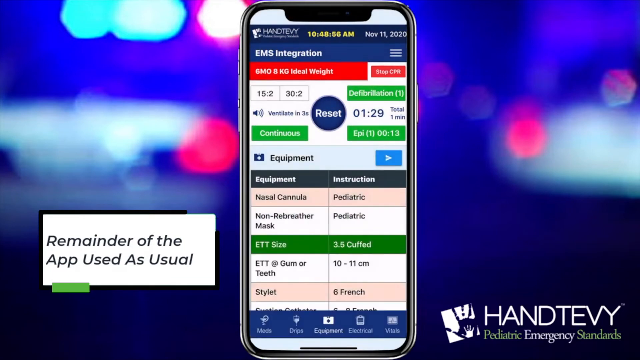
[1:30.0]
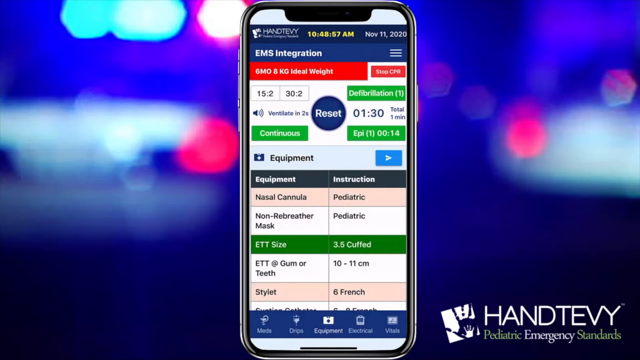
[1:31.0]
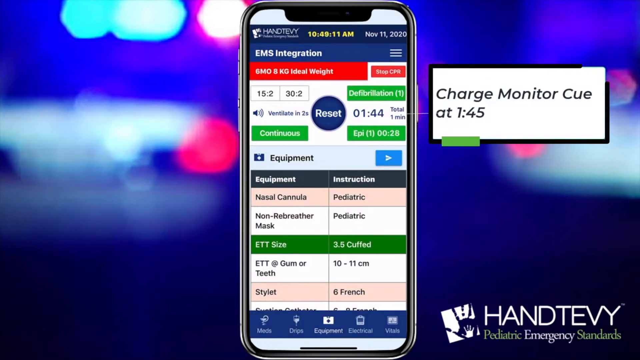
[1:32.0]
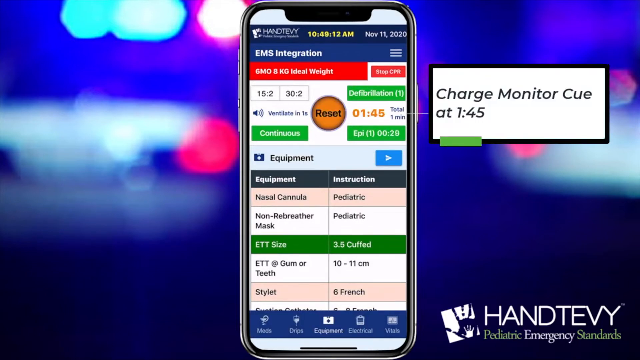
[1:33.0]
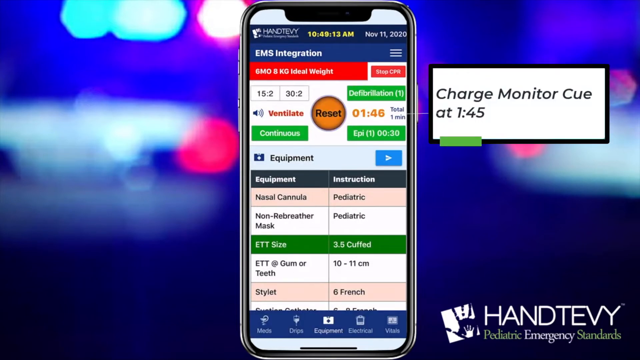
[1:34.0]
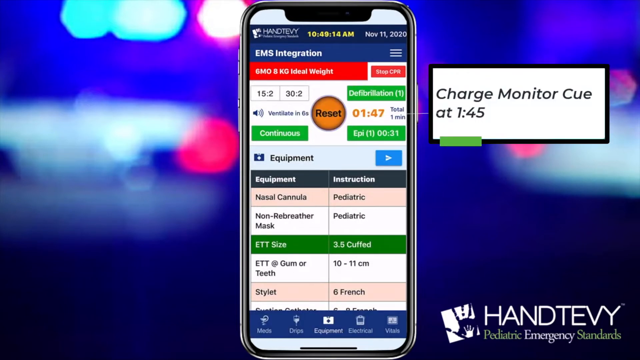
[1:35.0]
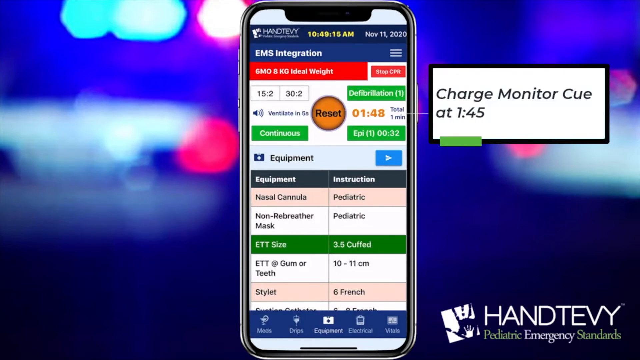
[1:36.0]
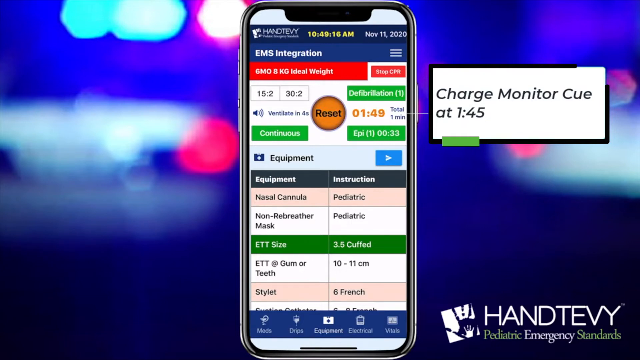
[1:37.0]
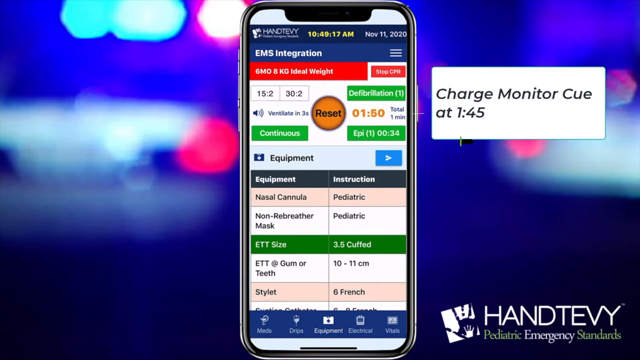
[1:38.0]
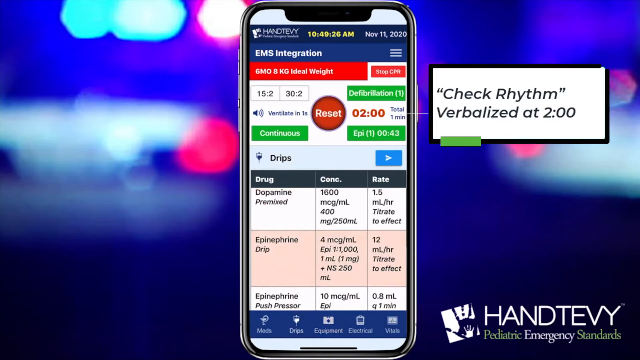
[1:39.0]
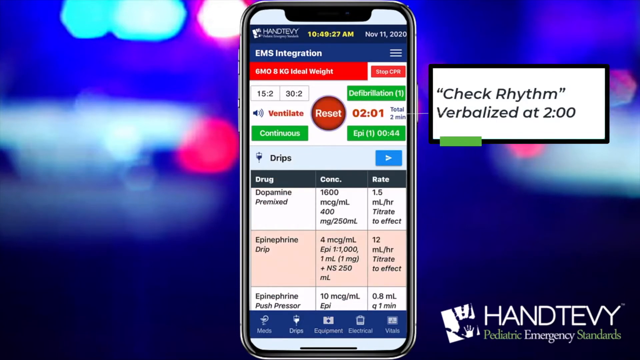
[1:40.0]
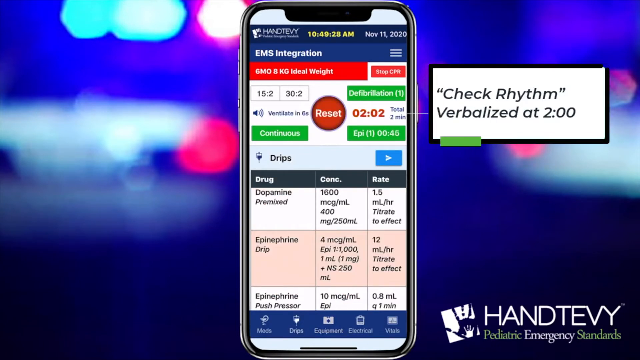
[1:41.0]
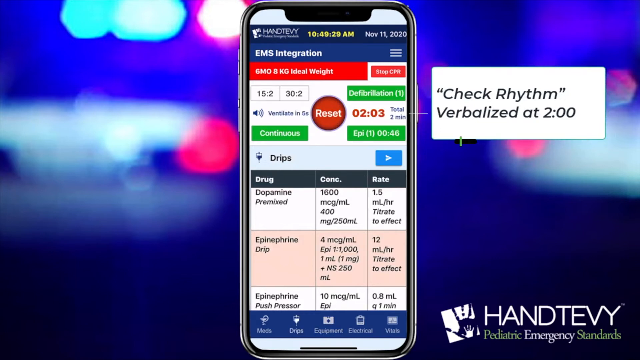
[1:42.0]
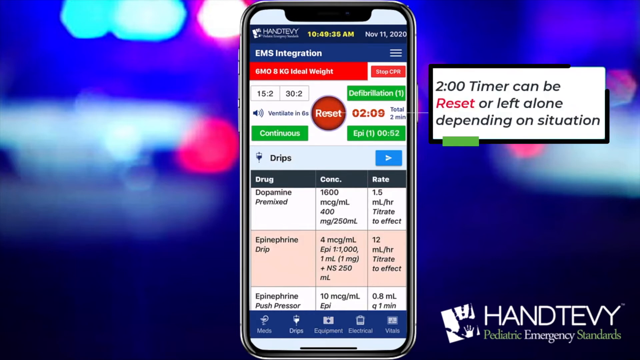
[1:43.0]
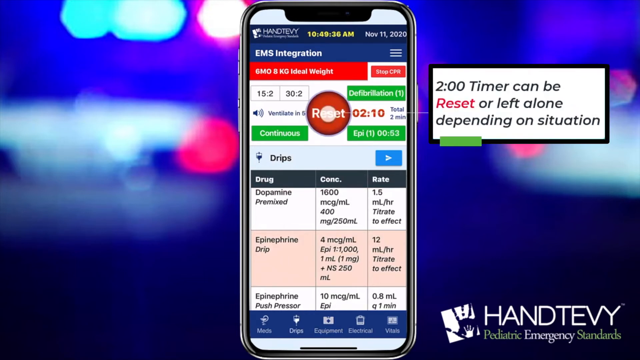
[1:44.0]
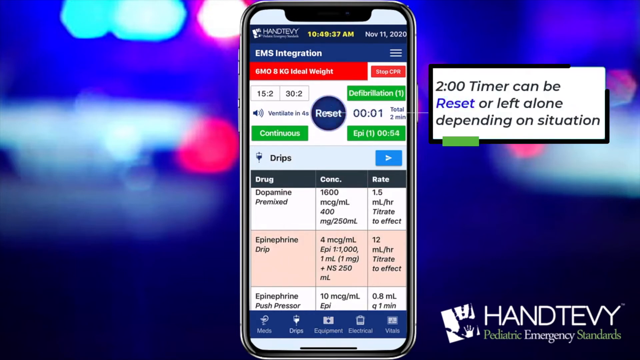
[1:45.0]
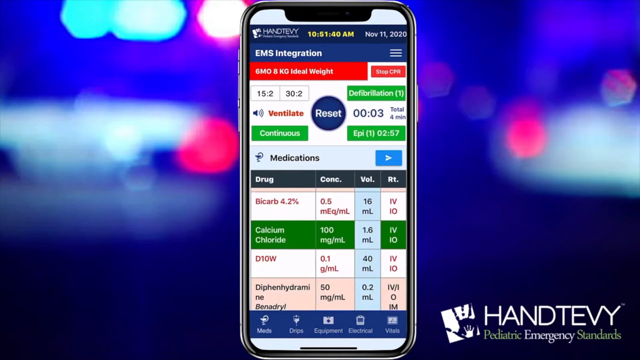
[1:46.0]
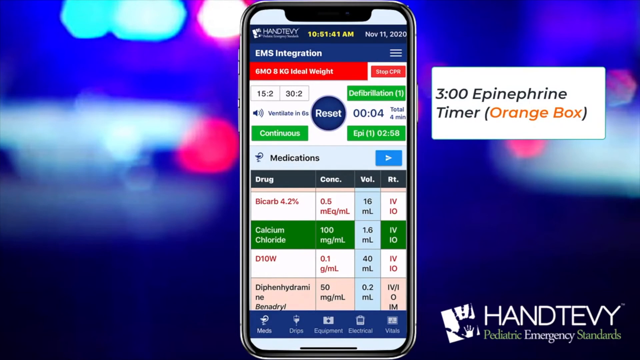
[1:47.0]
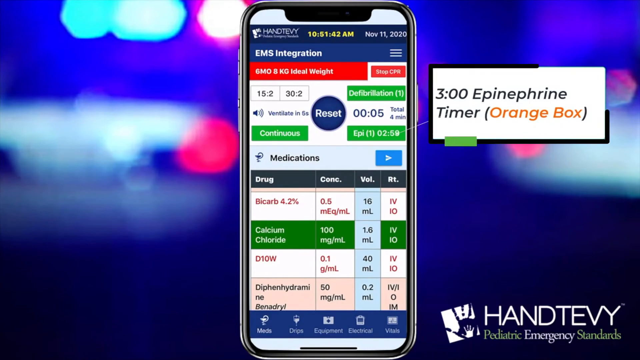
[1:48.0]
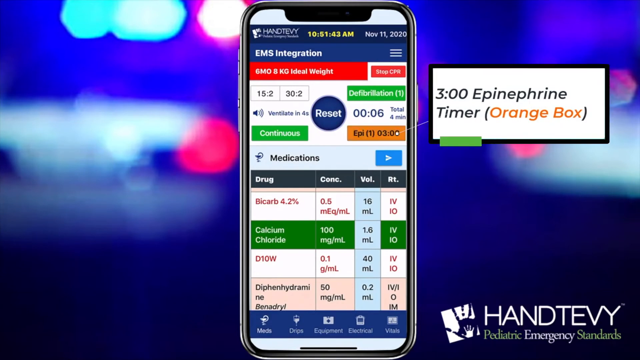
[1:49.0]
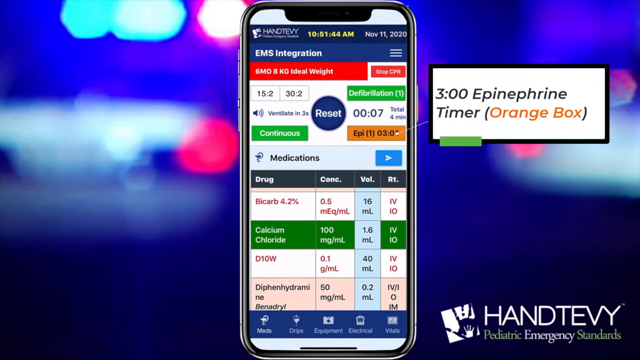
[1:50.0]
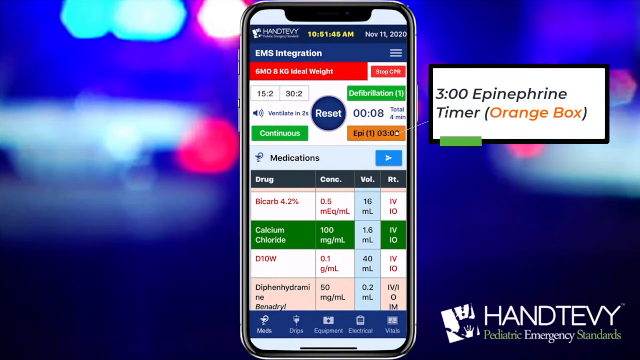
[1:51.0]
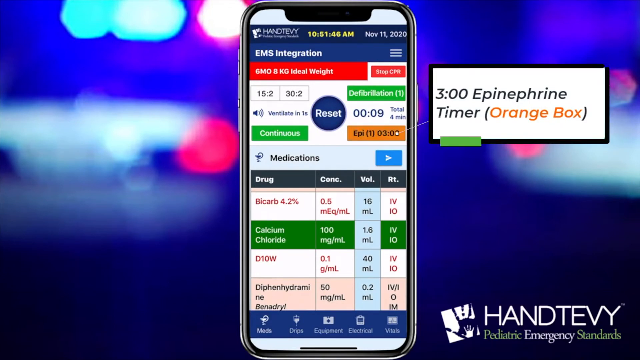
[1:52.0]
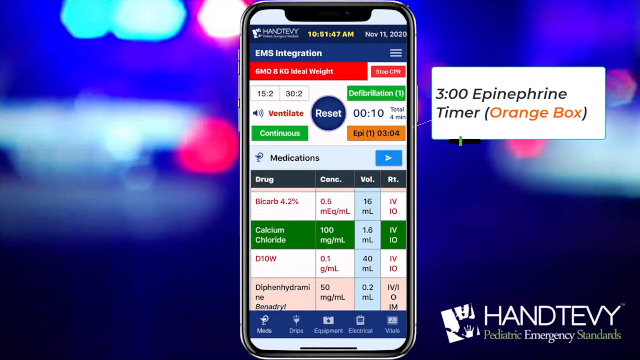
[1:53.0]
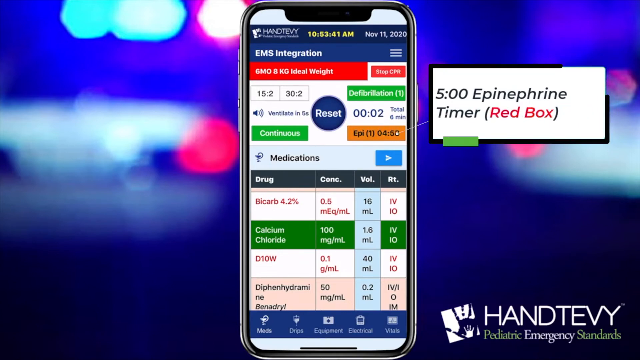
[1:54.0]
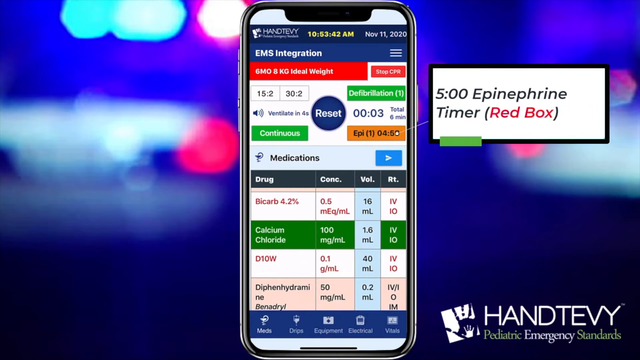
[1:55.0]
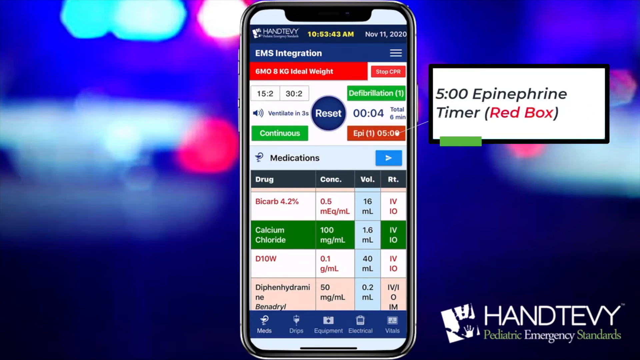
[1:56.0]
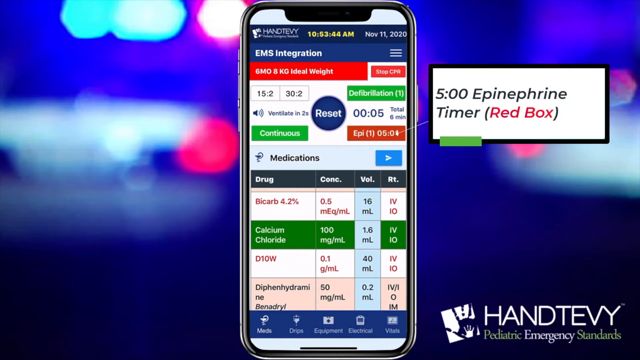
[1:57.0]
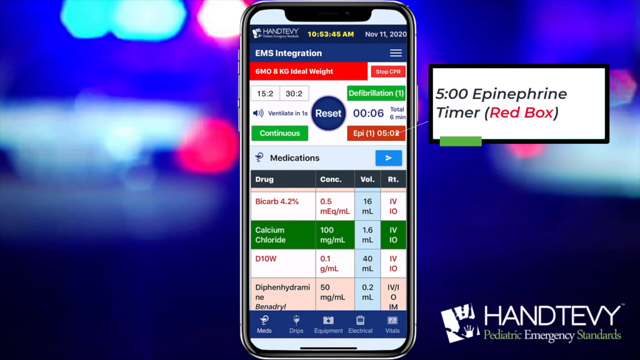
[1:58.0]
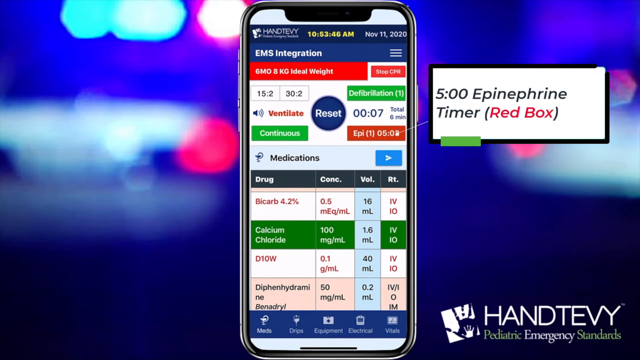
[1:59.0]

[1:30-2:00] An iPhone screen is displayed in the center of the image, running an app that assists EMS workers, with different features of the app described in text boxes surrounding it. In the lower left corner, a text box reads "Remainder of the app used as usual." Another appears on the upper right reading "Charge Monitor cue at 1:45," then "Check Rhythm Verbalized at 2:00," then "2:00 Timer can be Reset or left alone depending on situation," then "3:00 Epinephrine Timer (Orange Box)," and then "5:00 Epinephrine Timer (Red Box)." As these text boxes change, different lines appear pointing to different elements on the simulated phone screen. As the different functions are performed, different boxes and directions appear on the simulated phone screen. The background of the overall screen looks like blurry white, blue, and red lights.